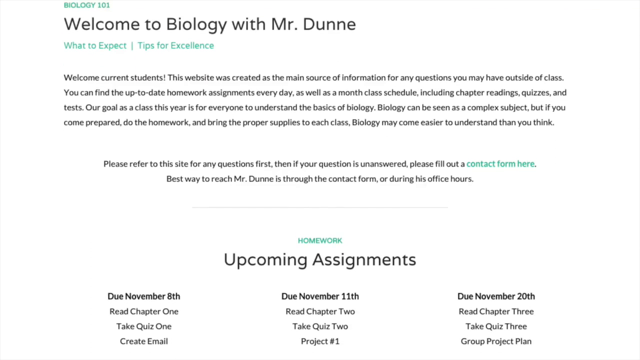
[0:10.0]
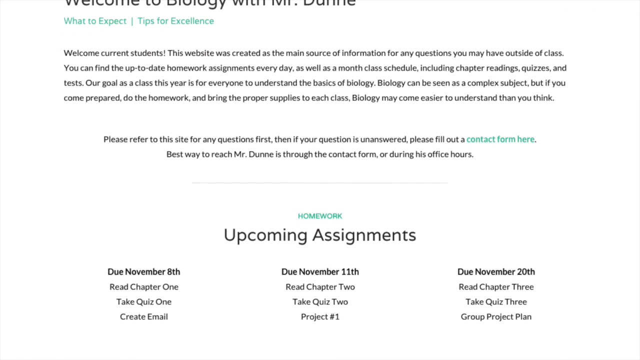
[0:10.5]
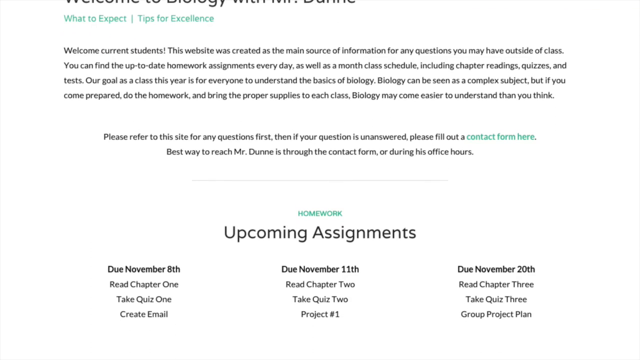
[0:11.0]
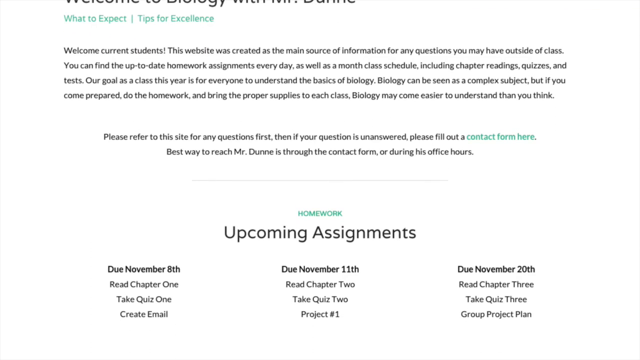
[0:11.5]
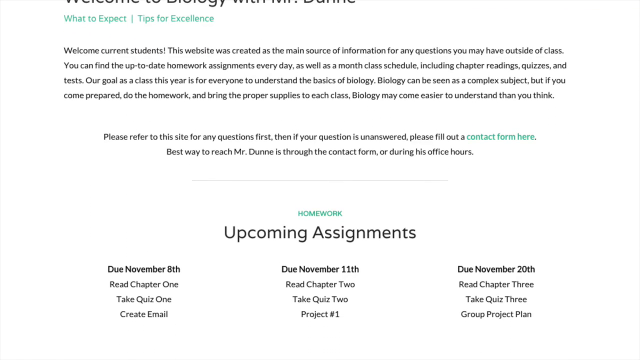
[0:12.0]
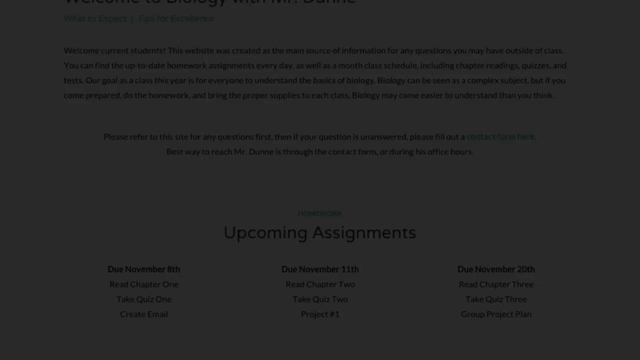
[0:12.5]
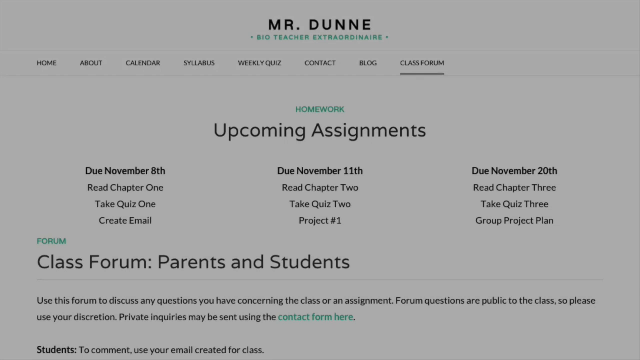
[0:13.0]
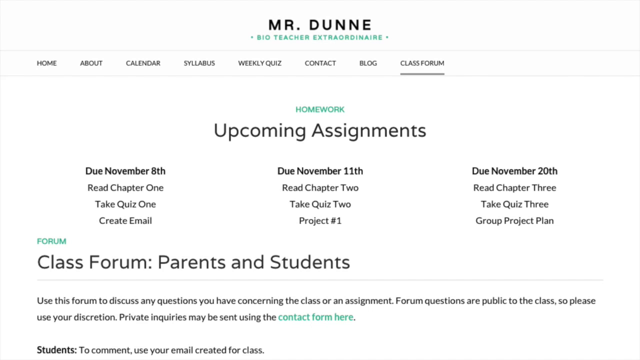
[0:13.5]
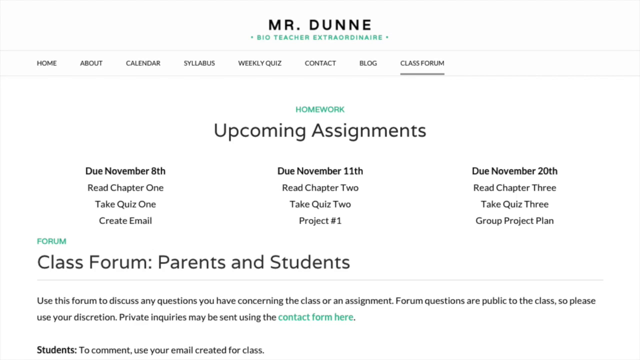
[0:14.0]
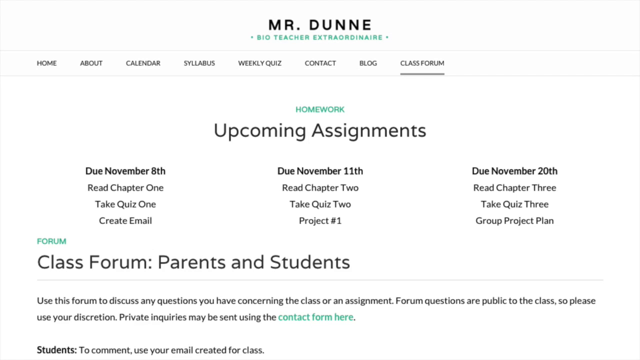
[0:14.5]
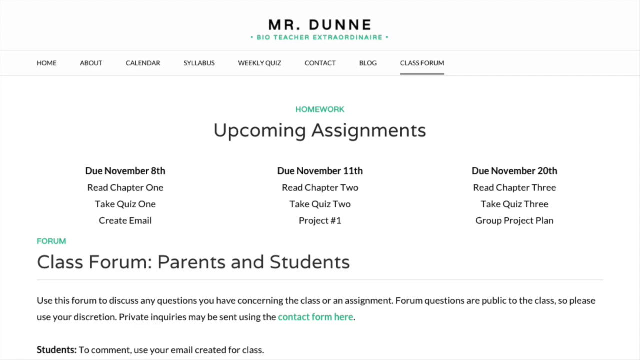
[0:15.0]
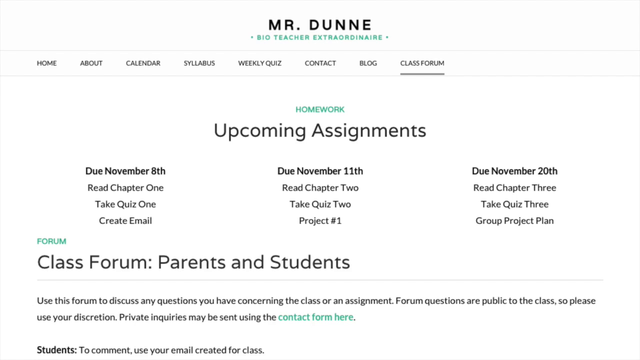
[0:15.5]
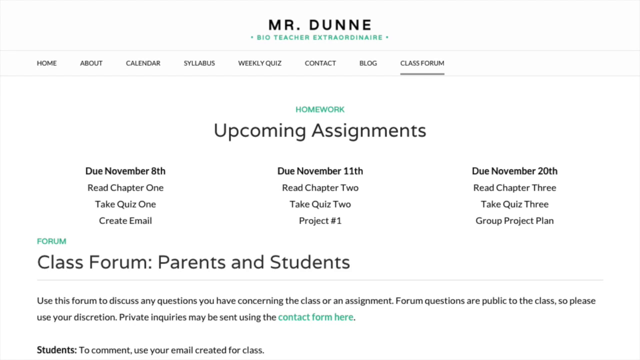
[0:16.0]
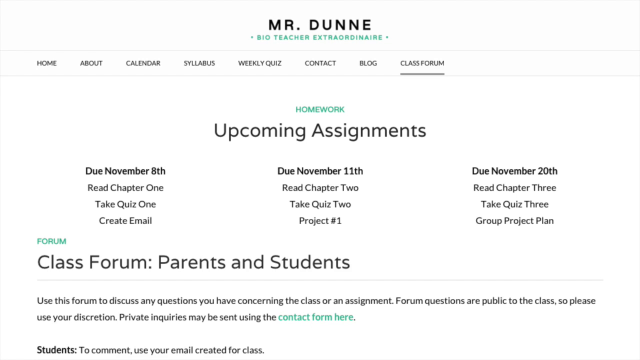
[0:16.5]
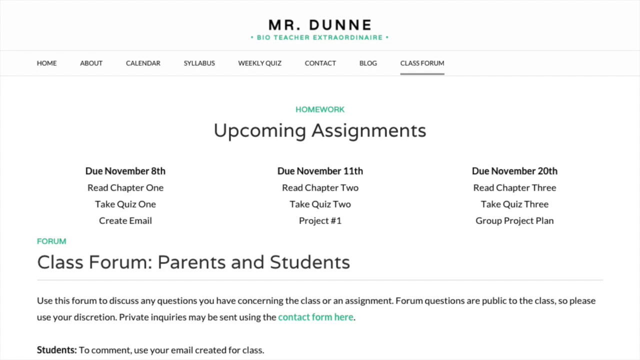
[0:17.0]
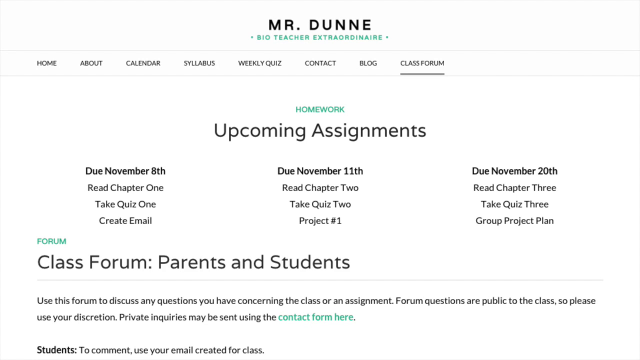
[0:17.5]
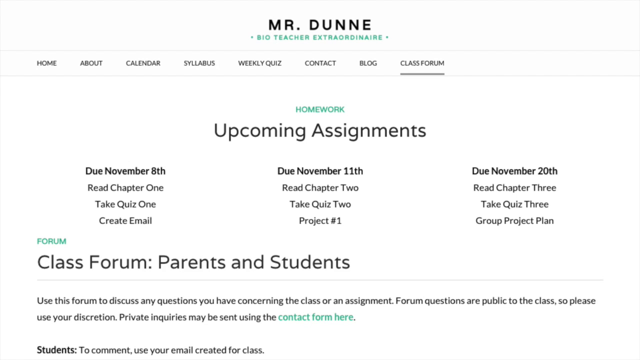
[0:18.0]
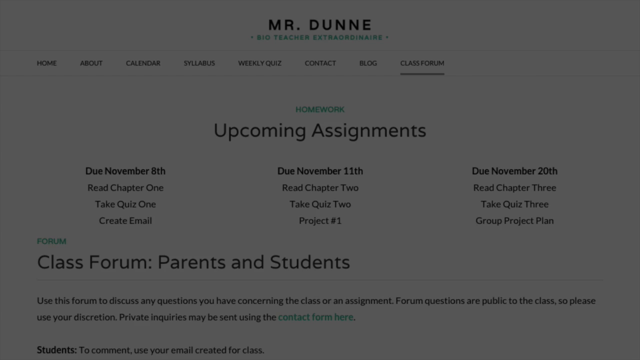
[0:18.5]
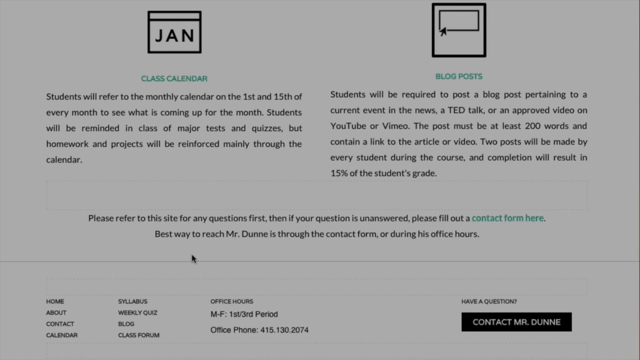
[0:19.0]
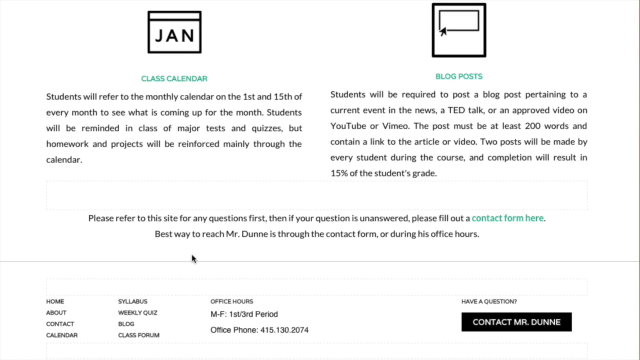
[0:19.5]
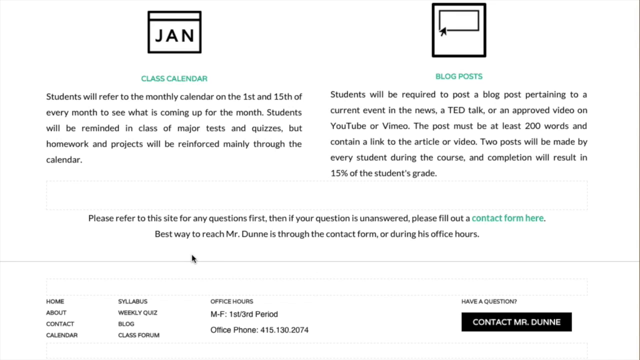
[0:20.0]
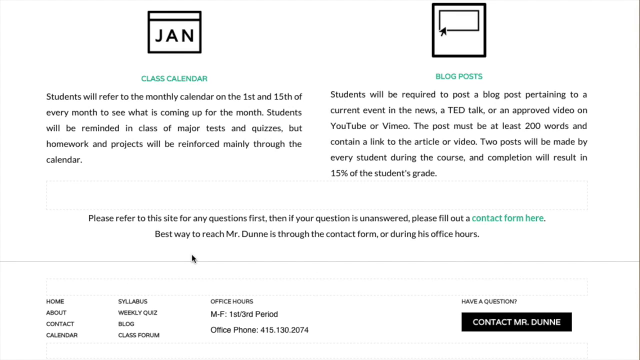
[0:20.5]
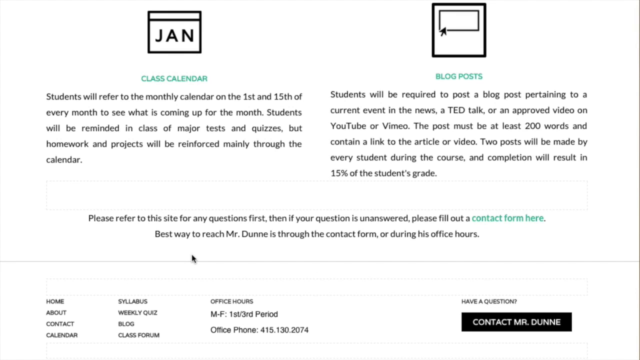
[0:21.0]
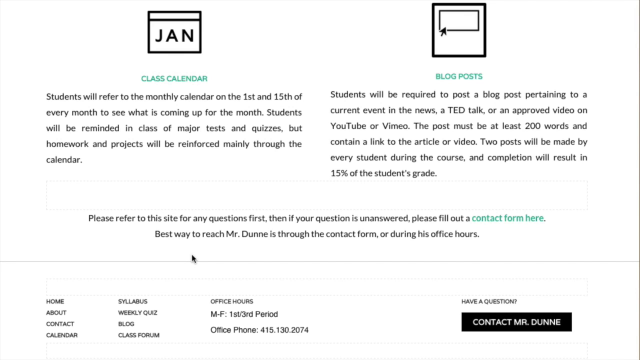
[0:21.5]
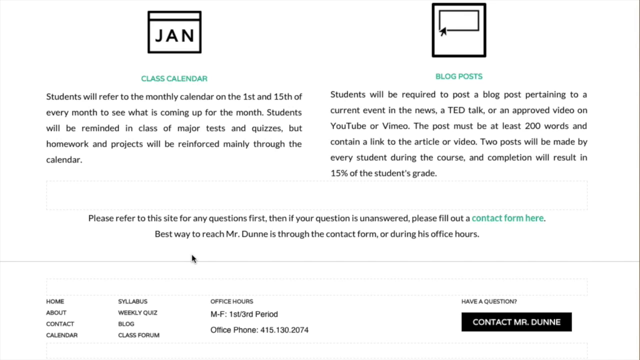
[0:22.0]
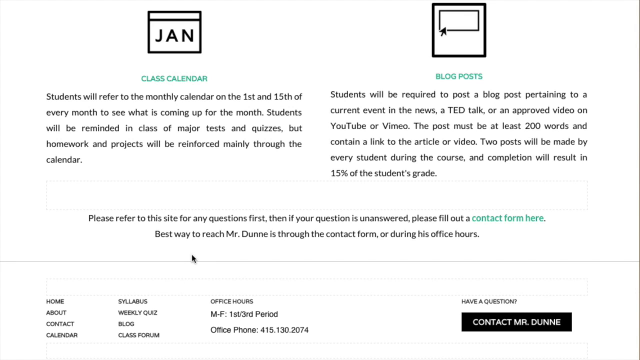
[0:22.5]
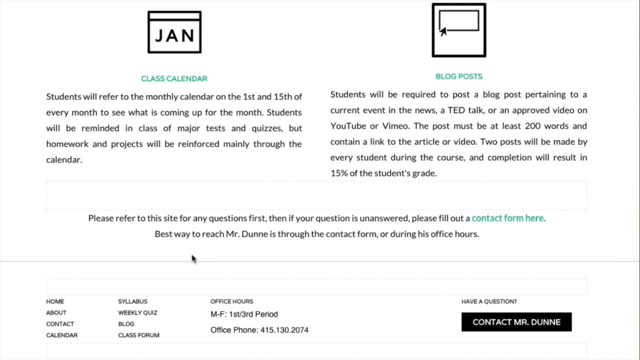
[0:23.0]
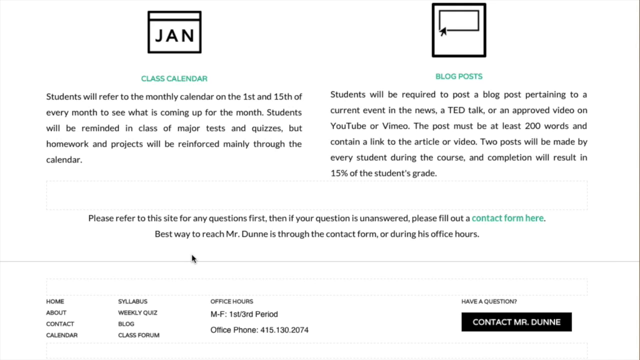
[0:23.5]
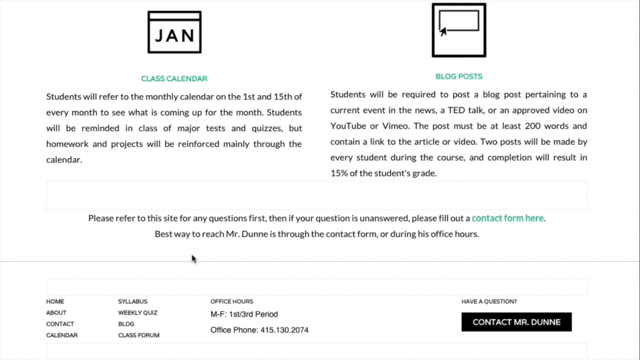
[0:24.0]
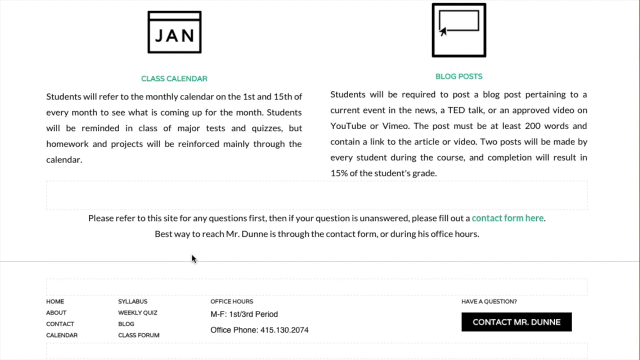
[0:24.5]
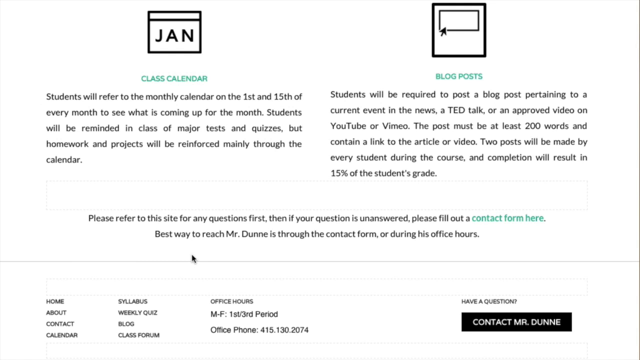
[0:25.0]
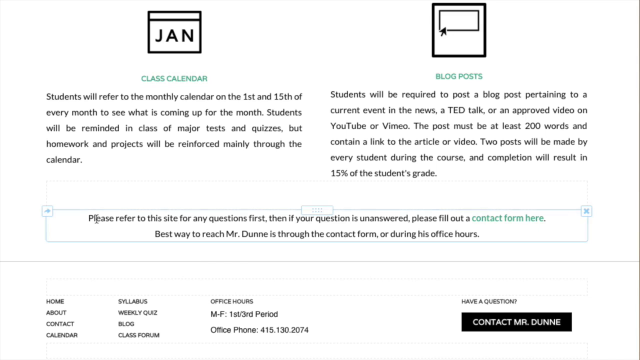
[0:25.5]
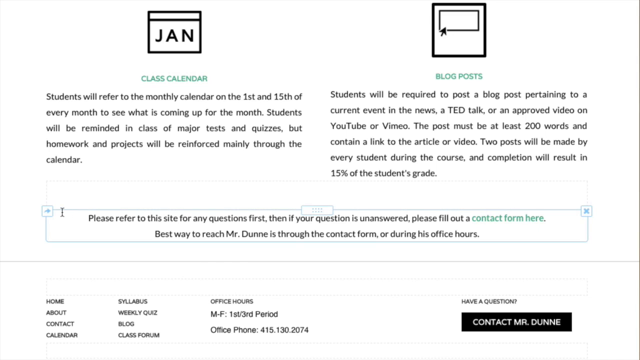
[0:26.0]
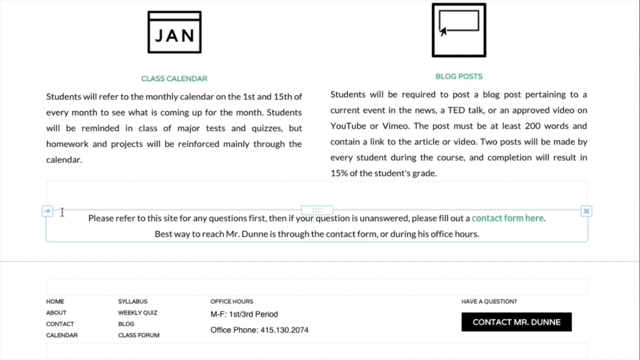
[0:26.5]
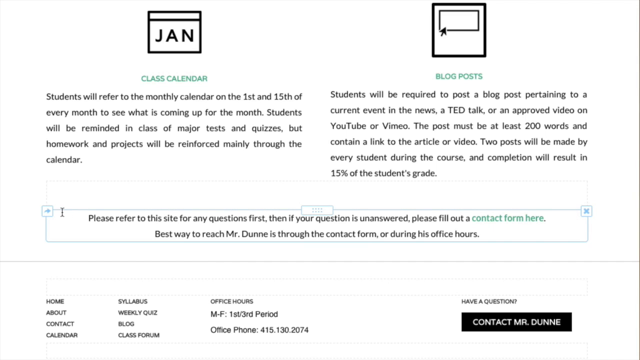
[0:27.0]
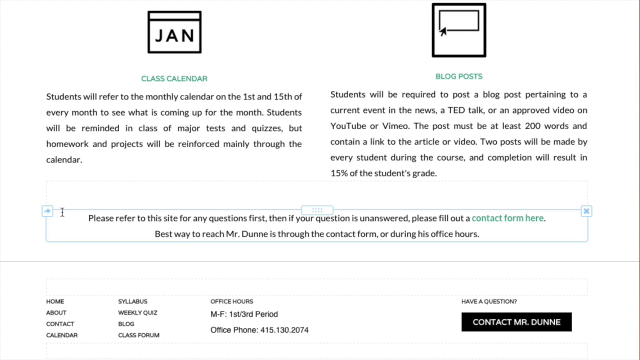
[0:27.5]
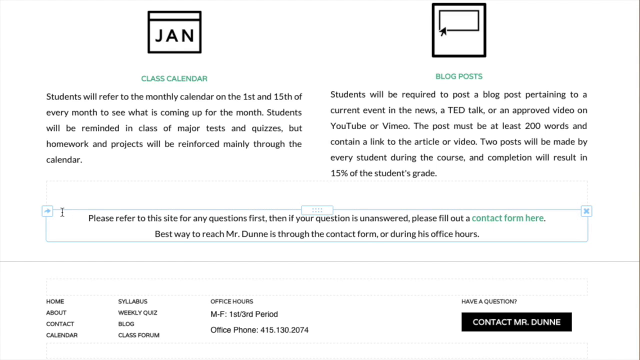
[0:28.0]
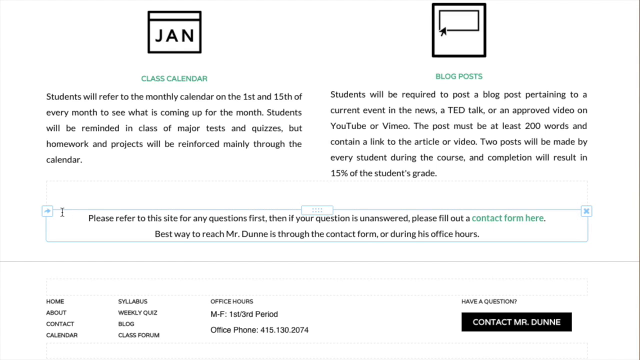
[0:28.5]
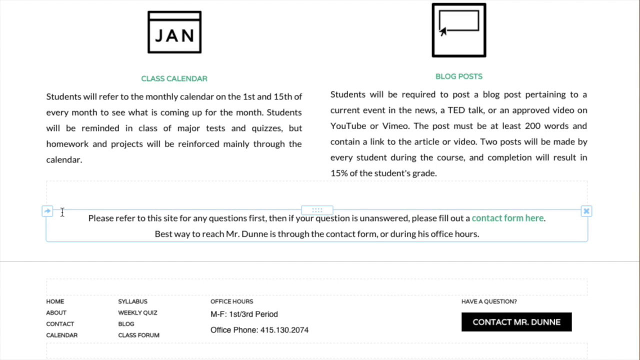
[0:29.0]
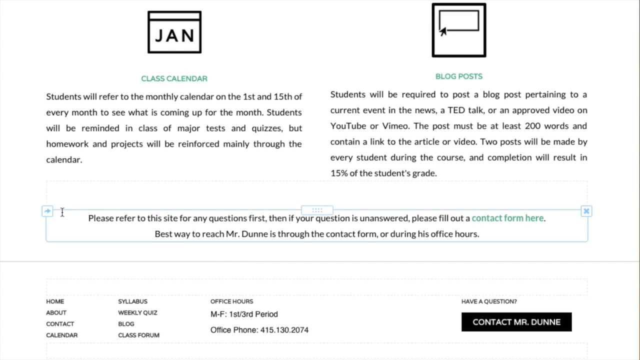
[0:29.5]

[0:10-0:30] The page lists Mr. Dubé's upcoming assignments for his students, with names and chapters: chapter one with take quiz one, chapter two with a June and 20th November date, quiz three, and a chapter project plan. One item is about creating an email and another is about a project plan. No people or kids appear on the screen. The writing is in green and black on a white page on the computer.